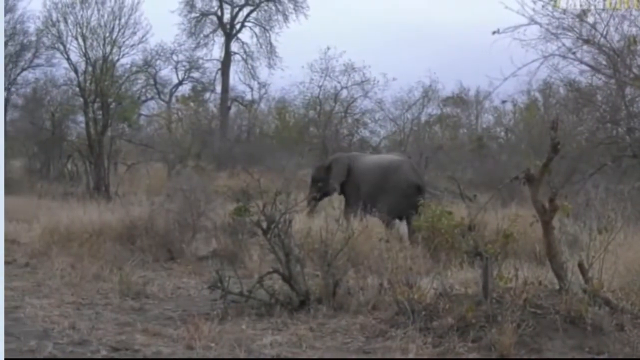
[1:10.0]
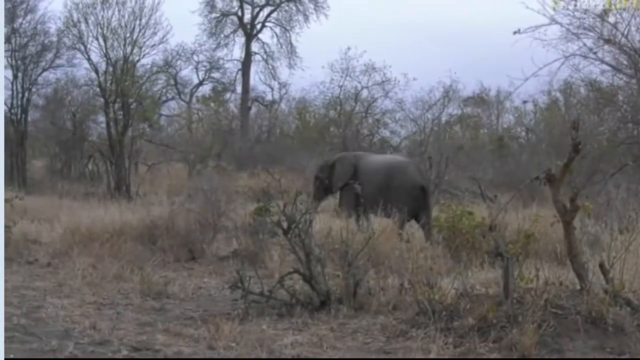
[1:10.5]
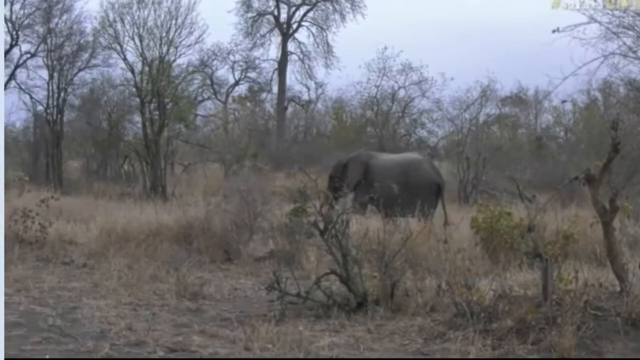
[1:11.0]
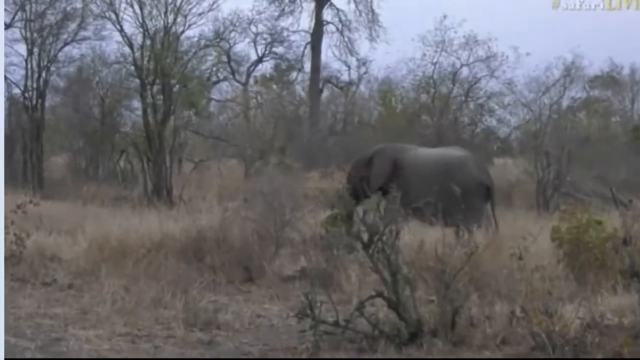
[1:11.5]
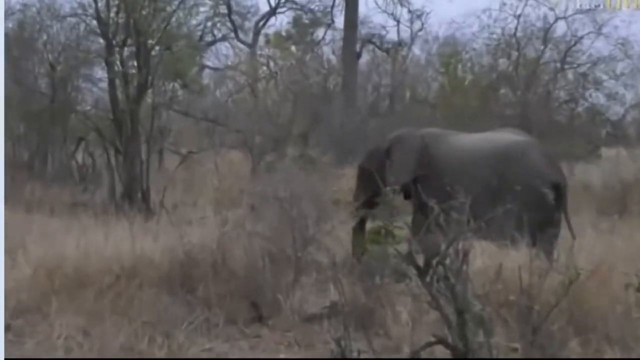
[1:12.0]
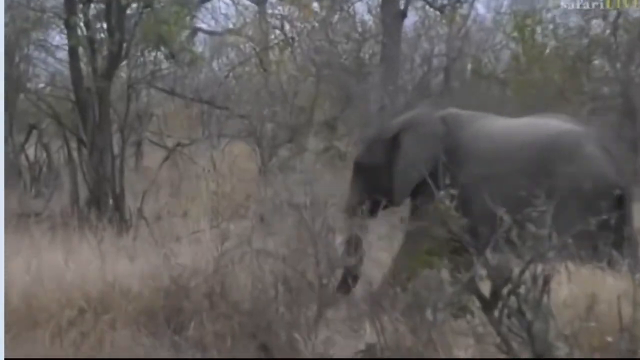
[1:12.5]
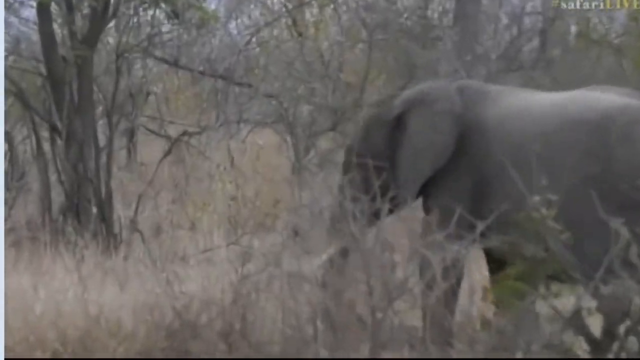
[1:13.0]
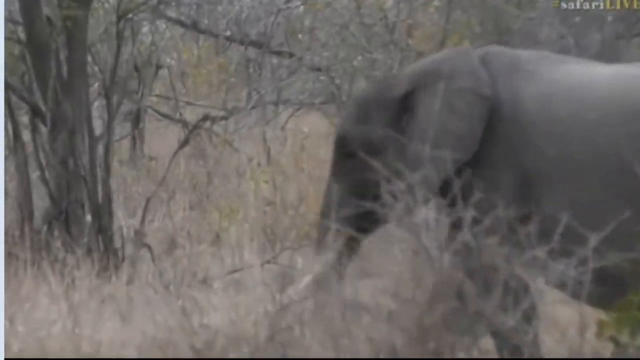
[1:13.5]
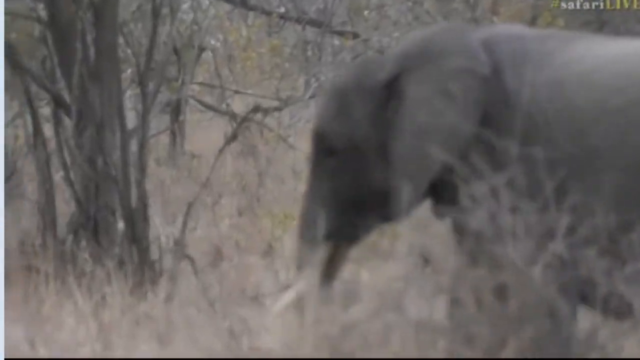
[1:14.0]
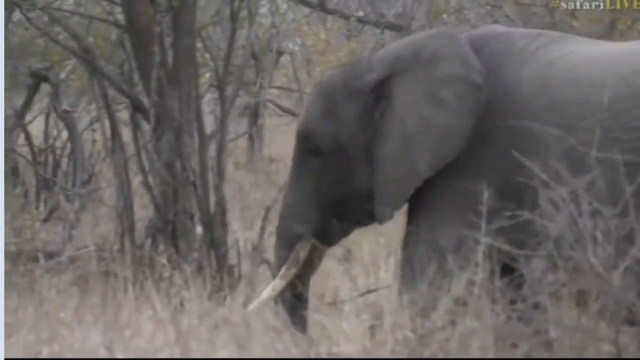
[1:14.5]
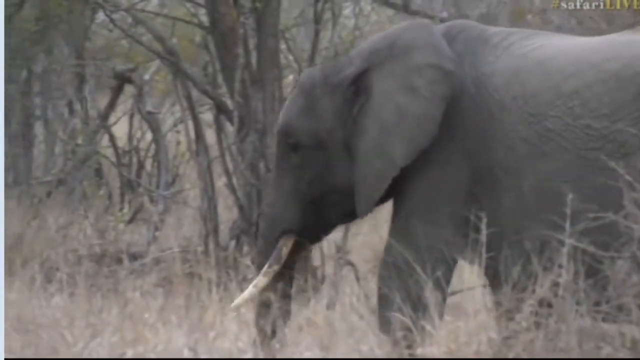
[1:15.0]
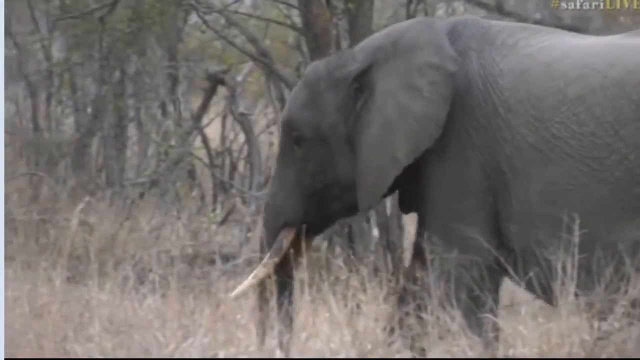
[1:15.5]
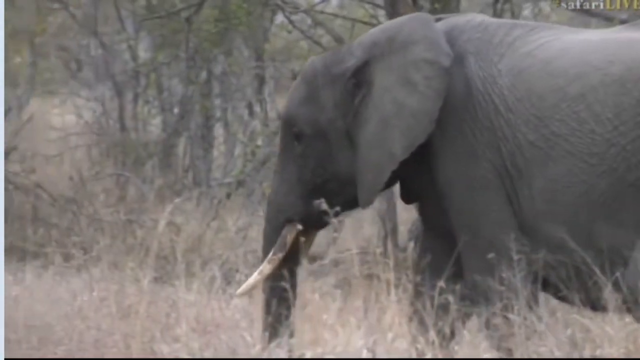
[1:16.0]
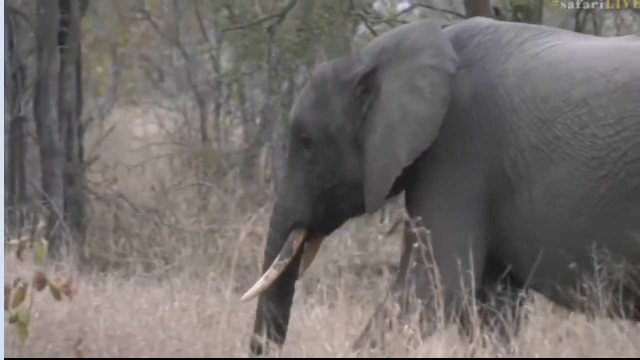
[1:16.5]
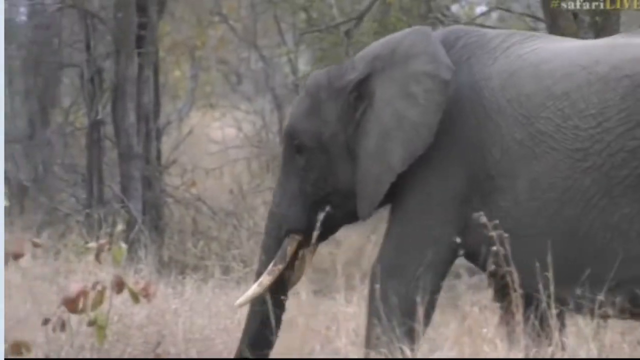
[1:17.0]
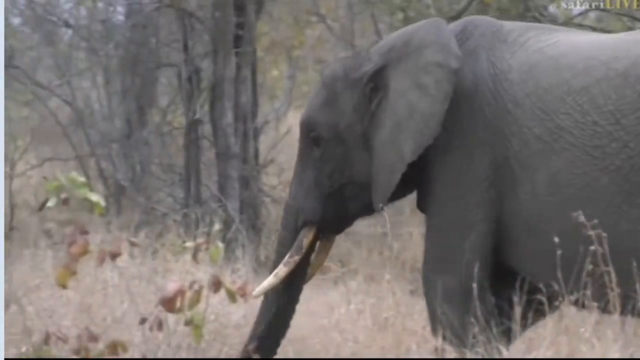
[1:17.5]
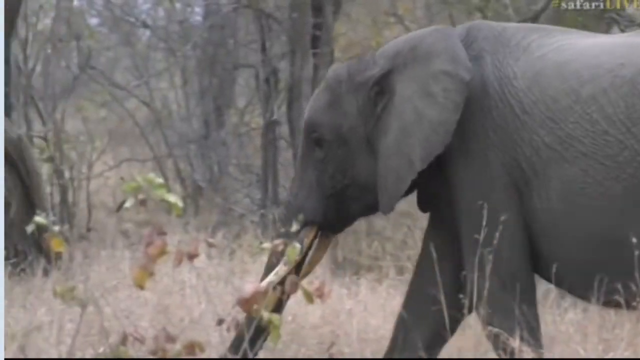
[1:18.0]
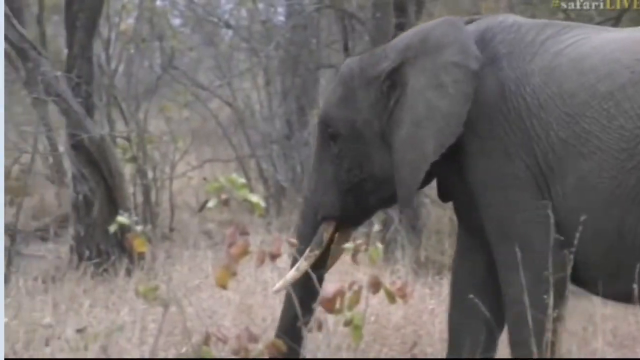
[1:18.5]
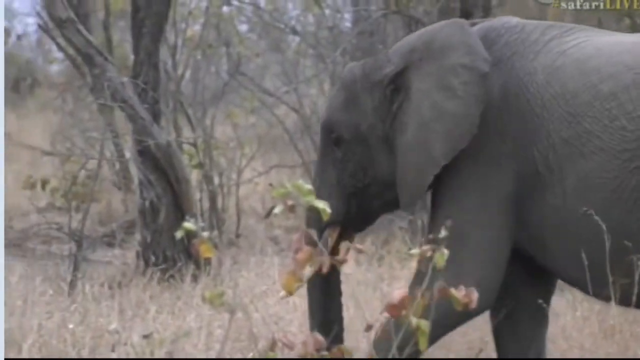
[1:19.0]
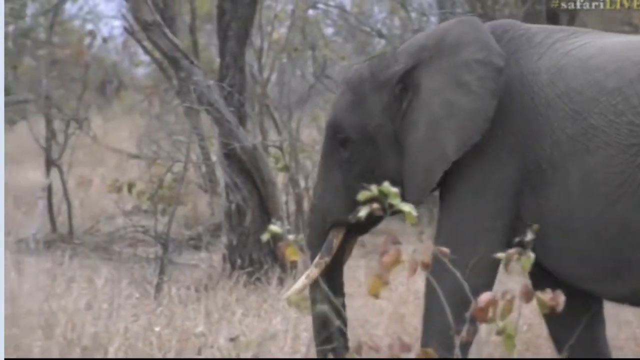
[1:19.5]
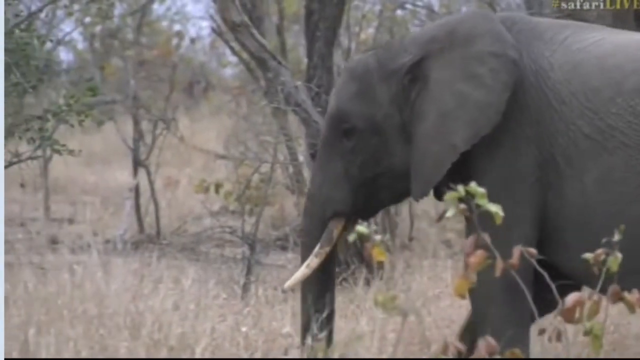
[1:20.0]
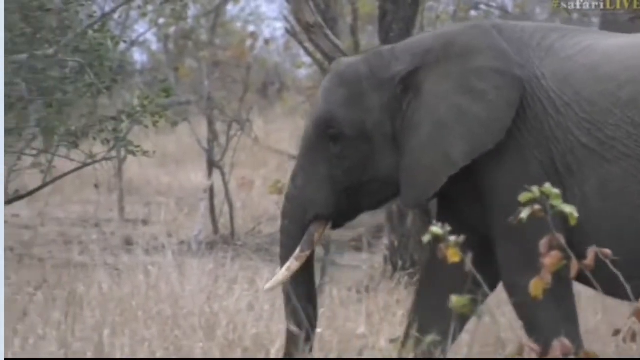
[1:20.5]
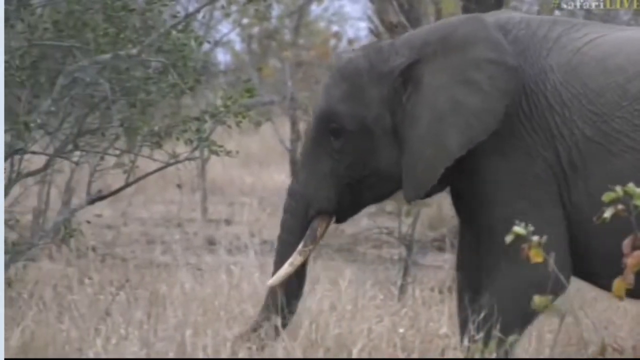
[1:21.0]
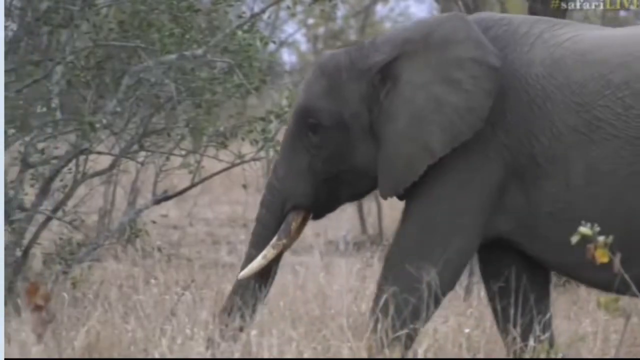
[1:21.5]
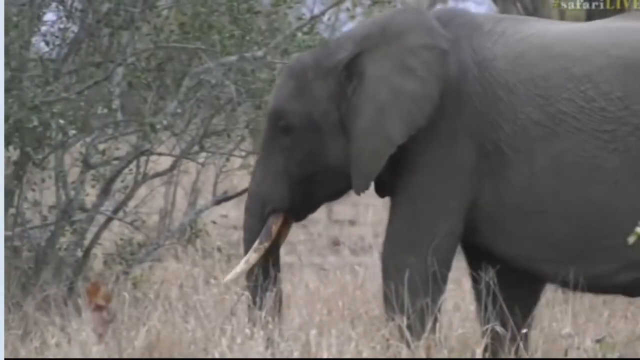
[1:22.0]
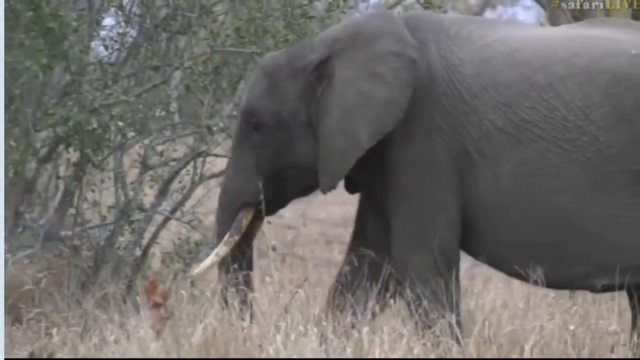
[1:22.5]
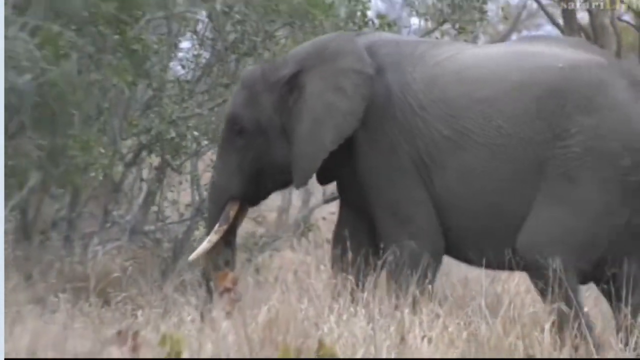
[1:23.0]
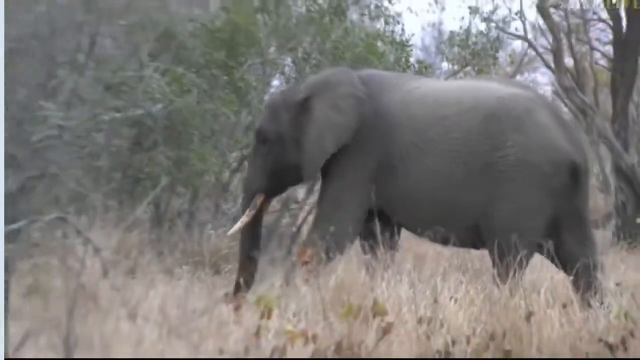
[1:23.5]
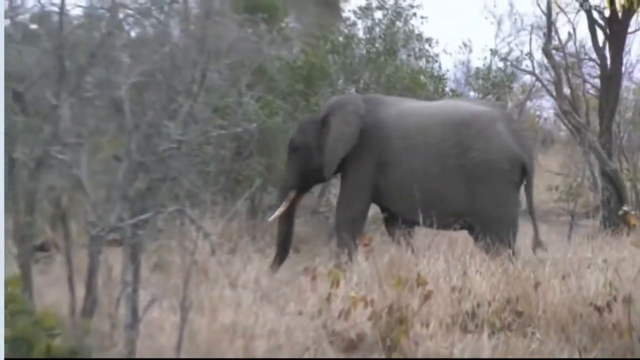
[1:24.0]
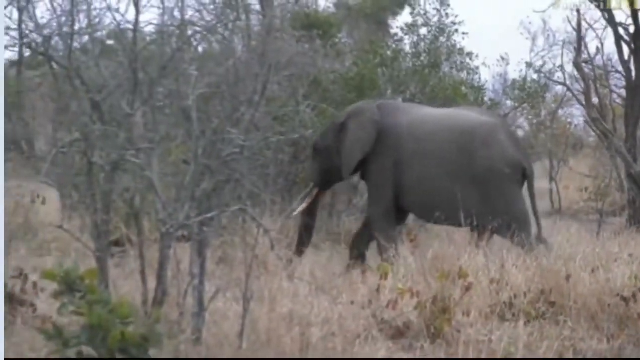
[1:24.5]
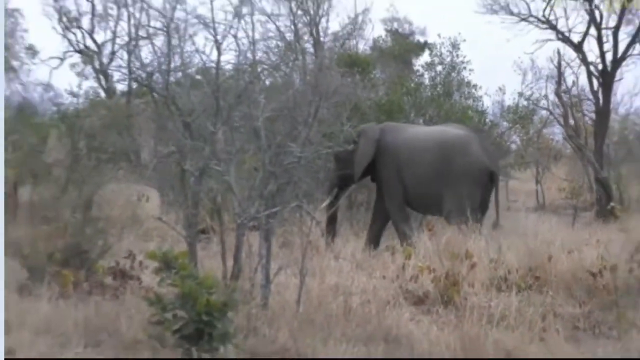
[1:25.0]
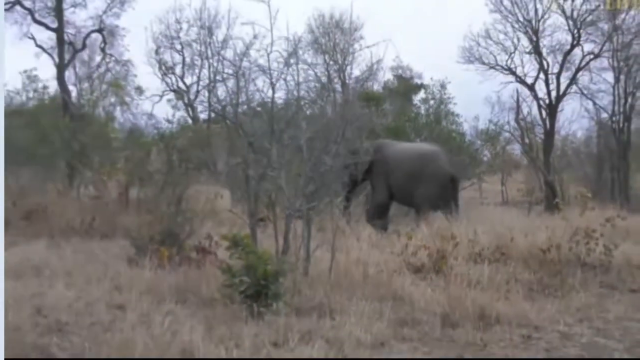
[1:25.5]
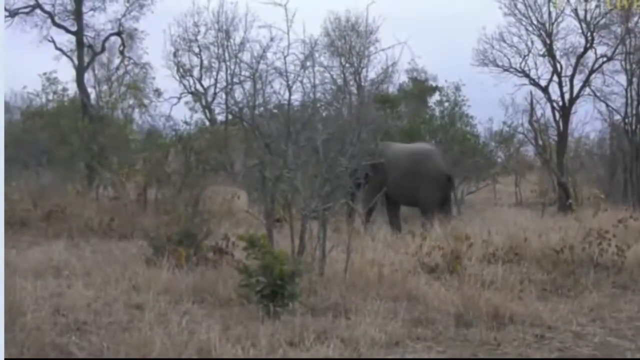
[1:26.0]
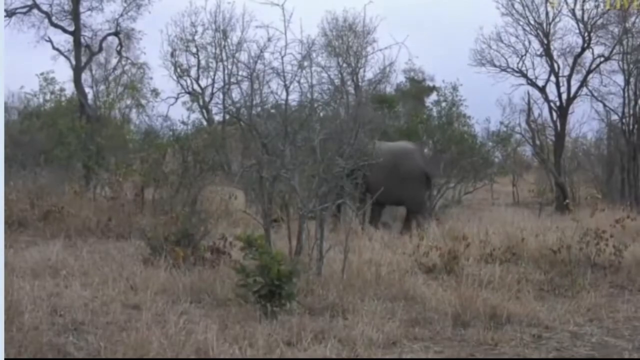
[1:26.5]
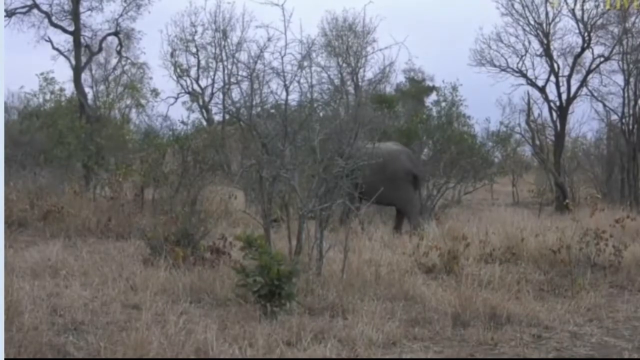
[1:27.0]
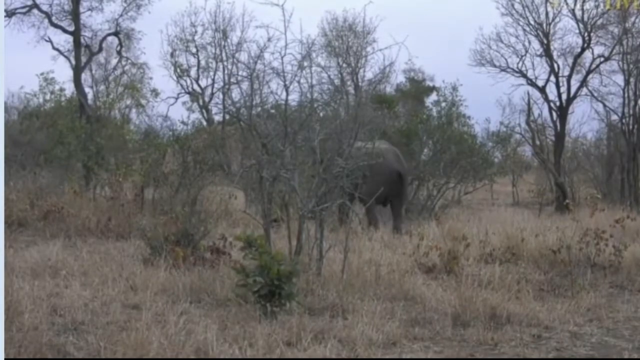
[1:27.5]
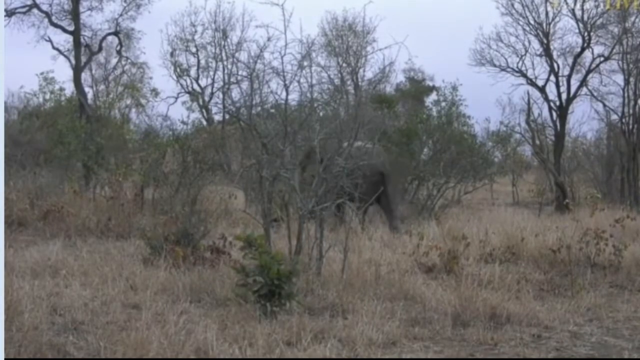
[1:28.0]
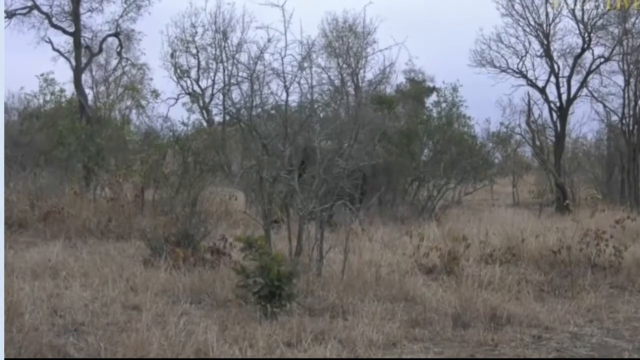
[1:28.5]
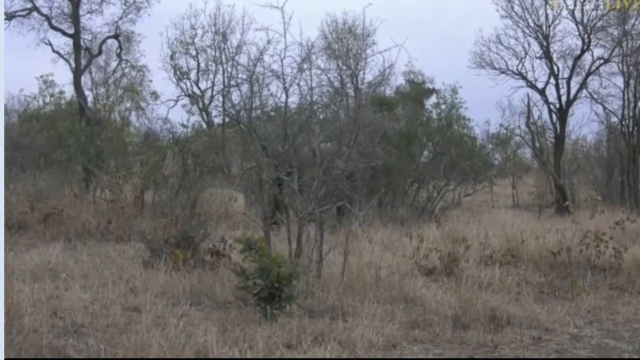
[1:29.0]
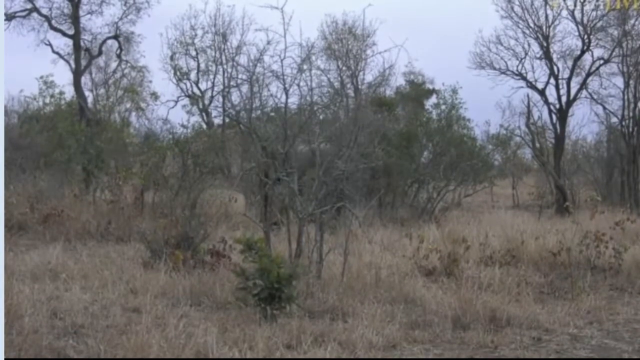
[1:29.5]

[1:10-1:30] The big grey elephant walks alone through a bush with big trees, ambling without rushing. It has a grey trunk, two white tusks, two big ears, two eyes, four legs, one head and one tail, and apart from the tusks its whole body is grey. The area is bushveld and very dry, seemingly in winter. The trees are tall and mostly dry, and where the elephant passes the grass is tall and dry.